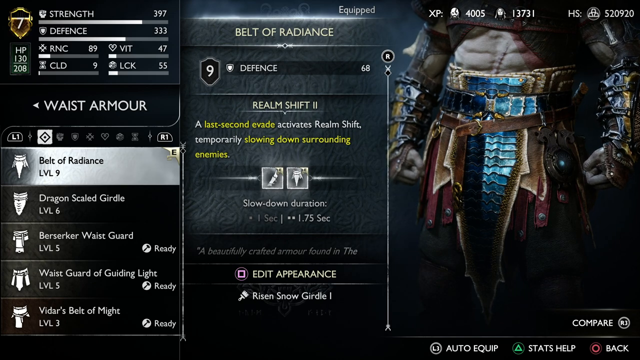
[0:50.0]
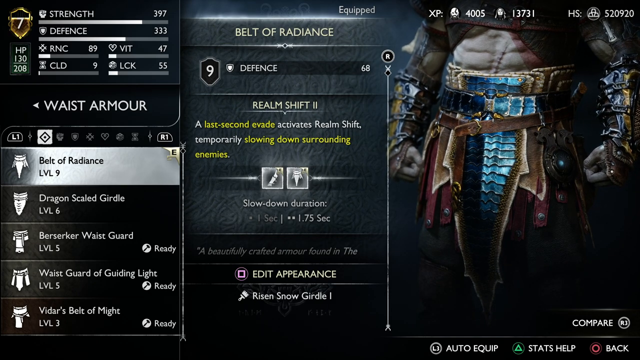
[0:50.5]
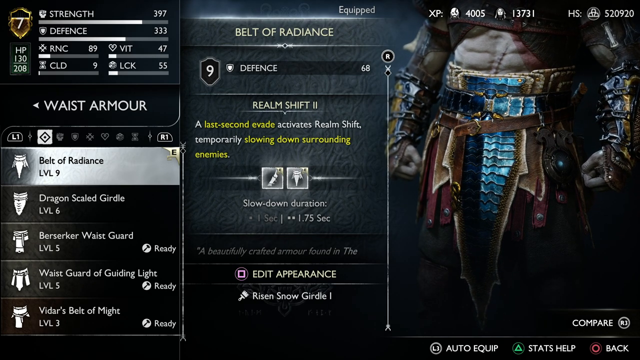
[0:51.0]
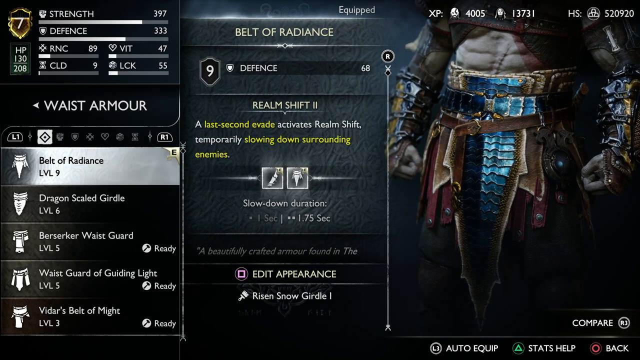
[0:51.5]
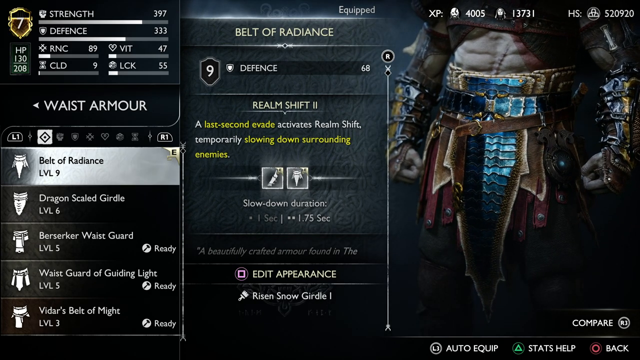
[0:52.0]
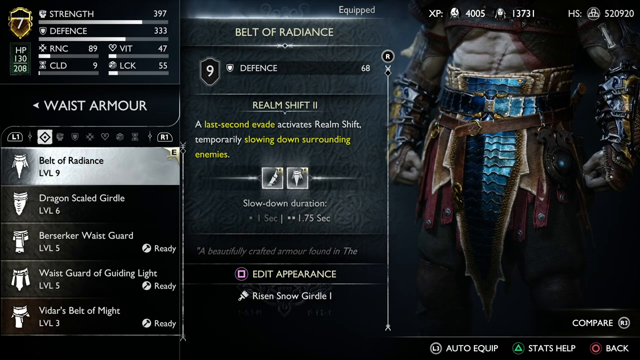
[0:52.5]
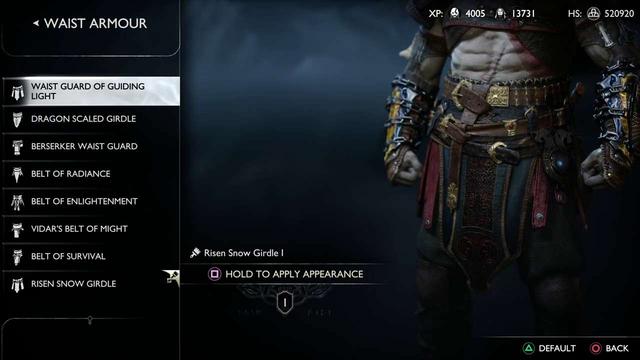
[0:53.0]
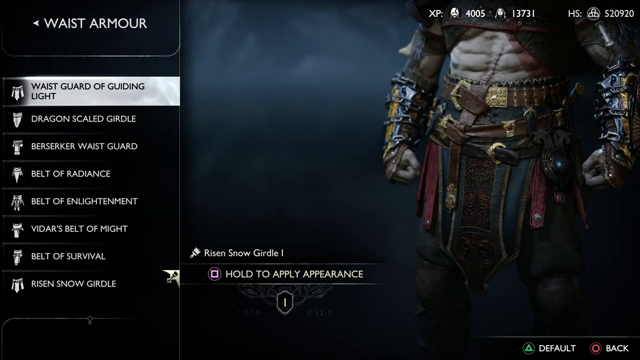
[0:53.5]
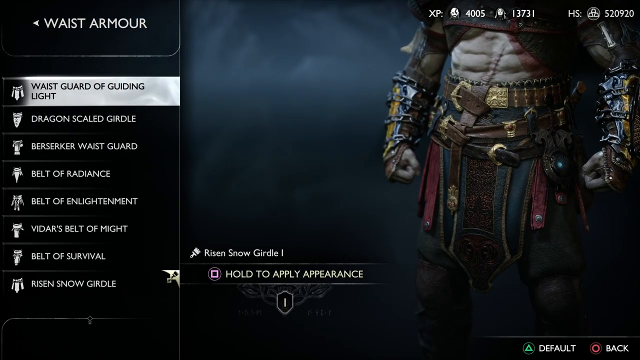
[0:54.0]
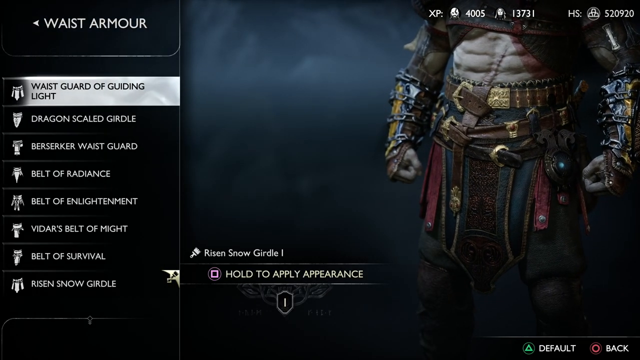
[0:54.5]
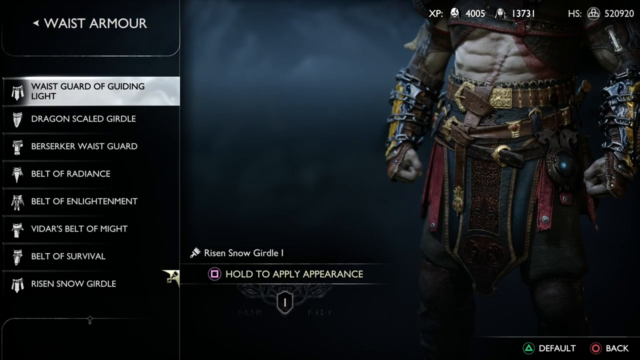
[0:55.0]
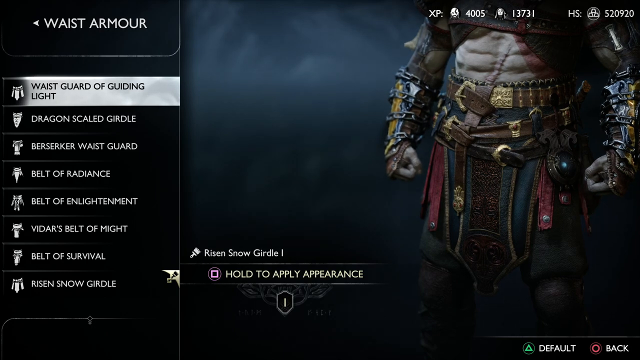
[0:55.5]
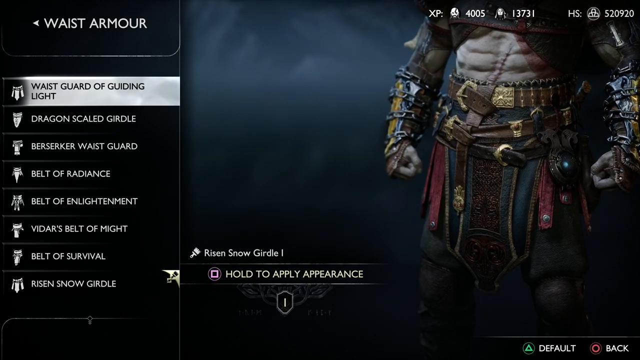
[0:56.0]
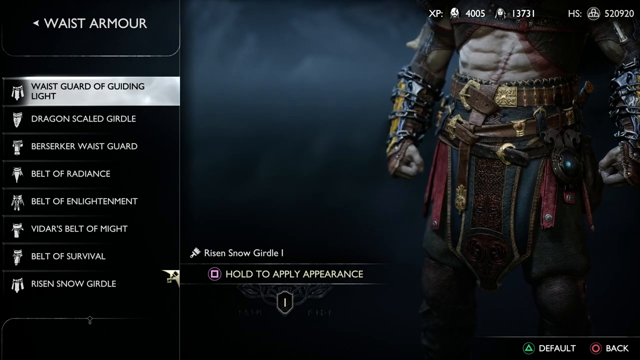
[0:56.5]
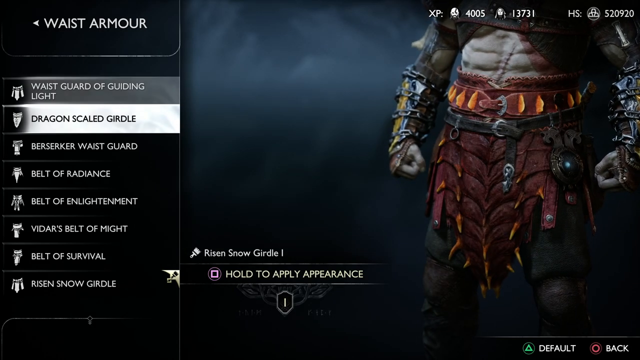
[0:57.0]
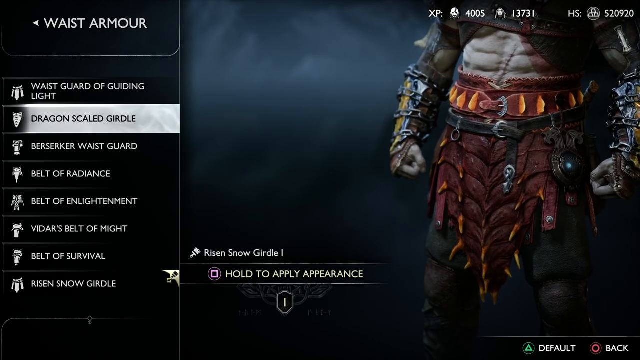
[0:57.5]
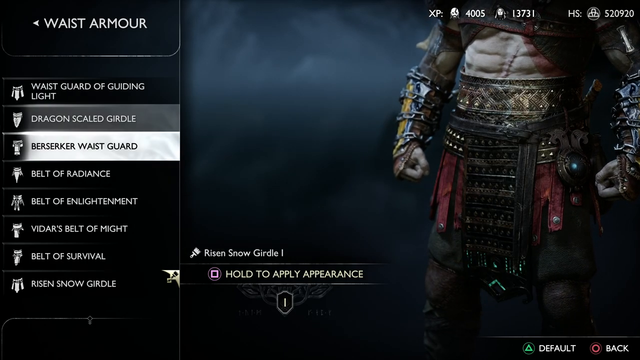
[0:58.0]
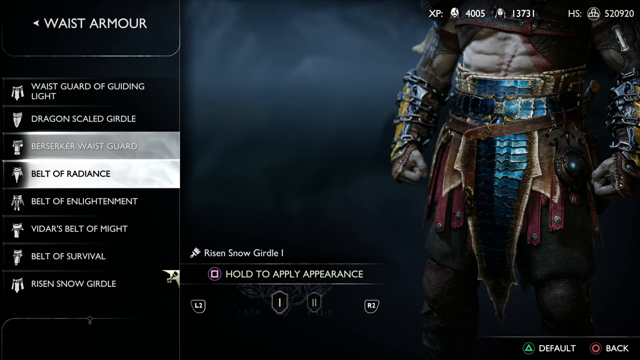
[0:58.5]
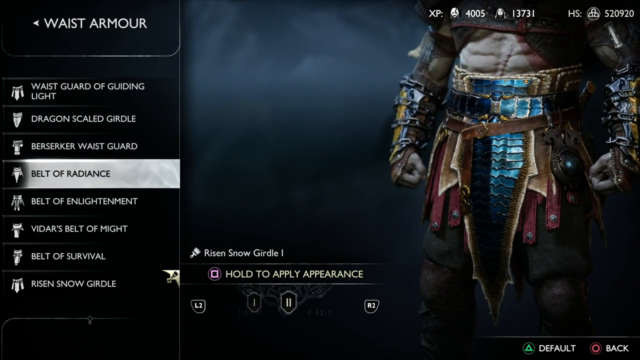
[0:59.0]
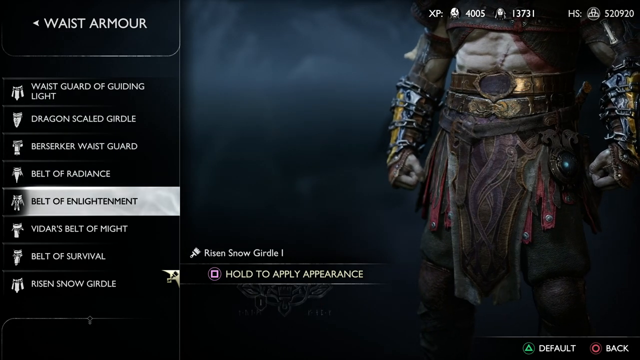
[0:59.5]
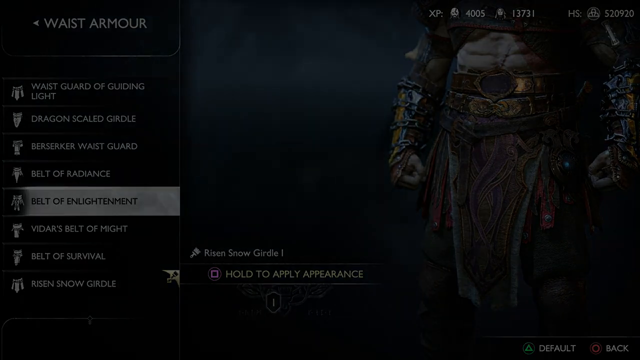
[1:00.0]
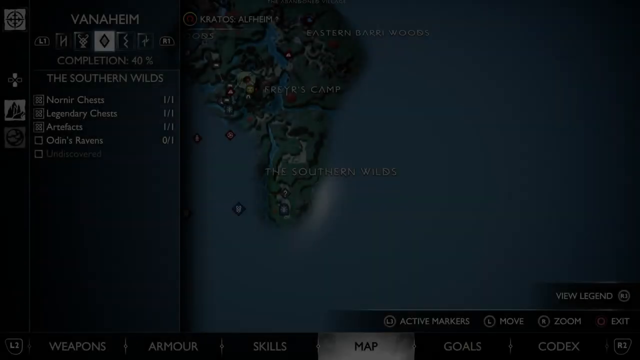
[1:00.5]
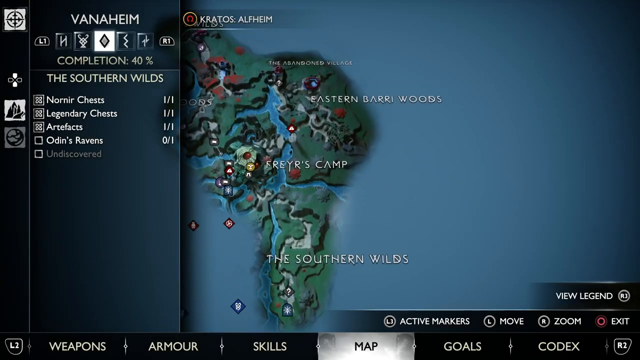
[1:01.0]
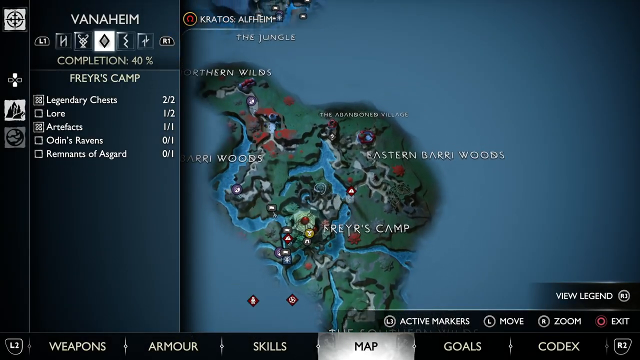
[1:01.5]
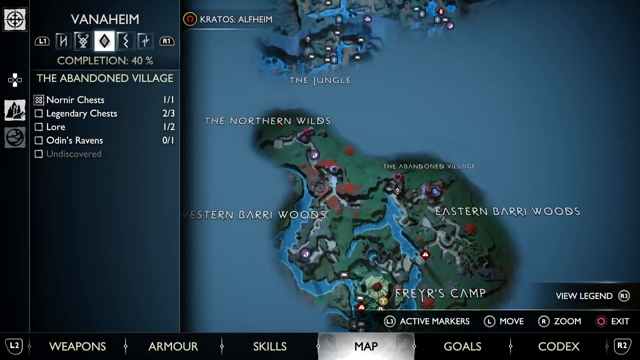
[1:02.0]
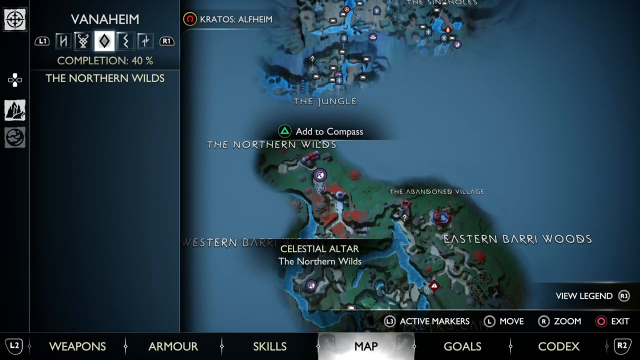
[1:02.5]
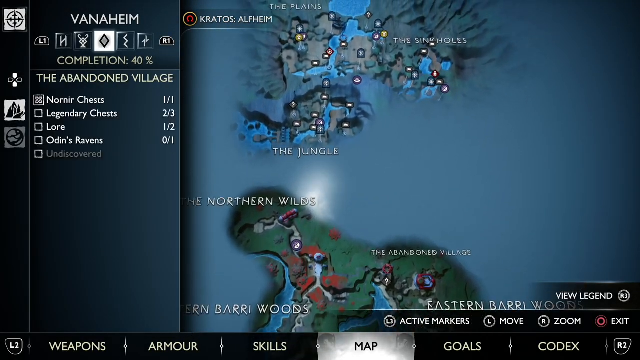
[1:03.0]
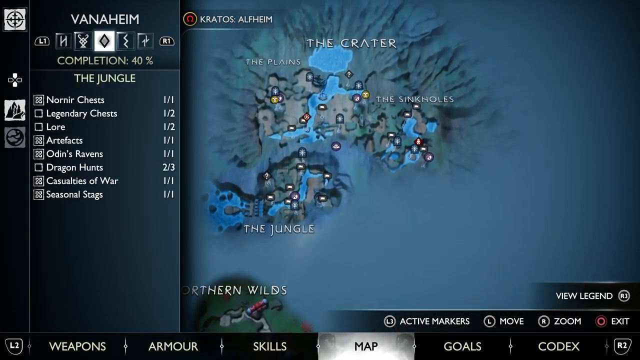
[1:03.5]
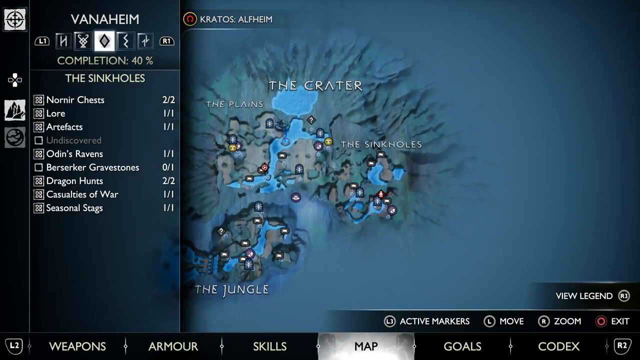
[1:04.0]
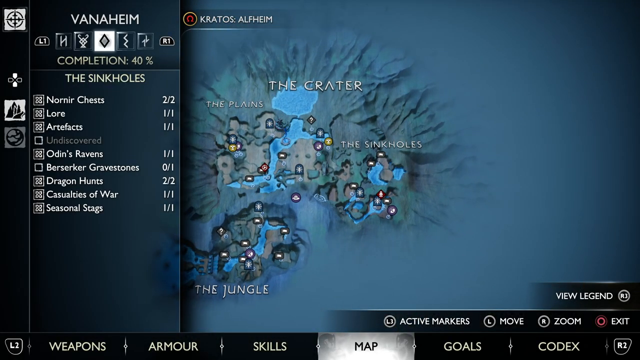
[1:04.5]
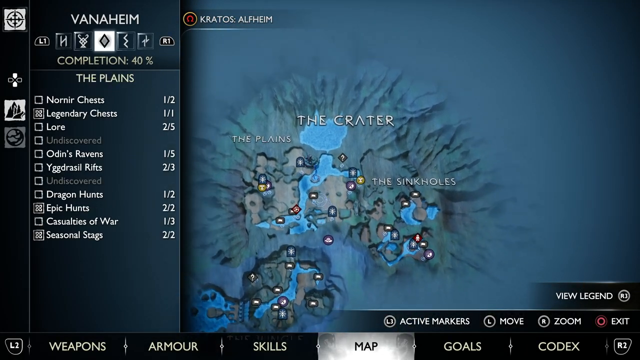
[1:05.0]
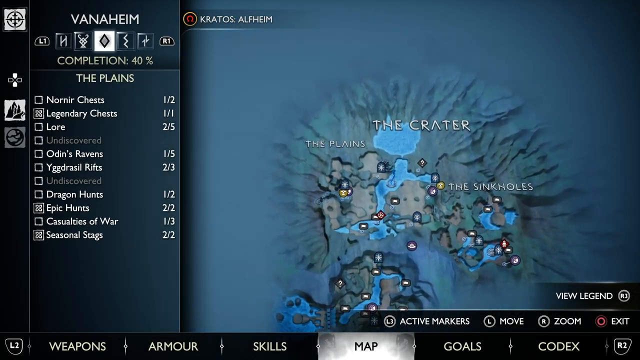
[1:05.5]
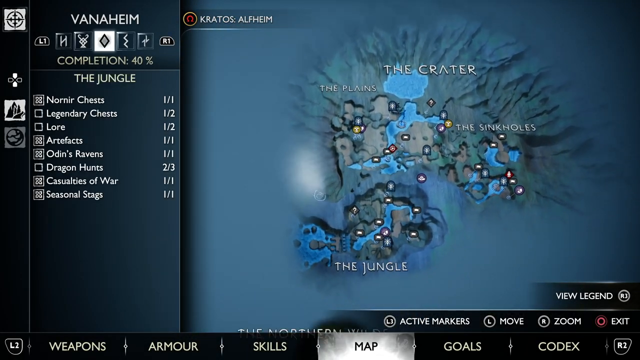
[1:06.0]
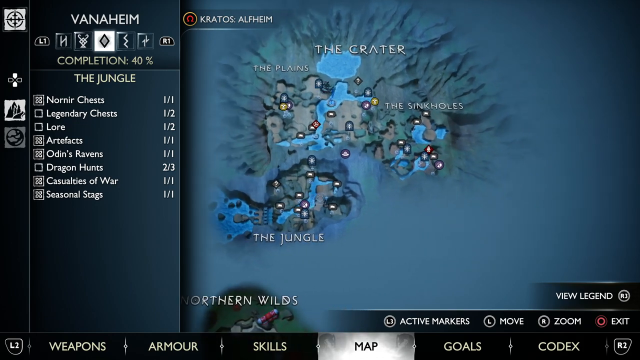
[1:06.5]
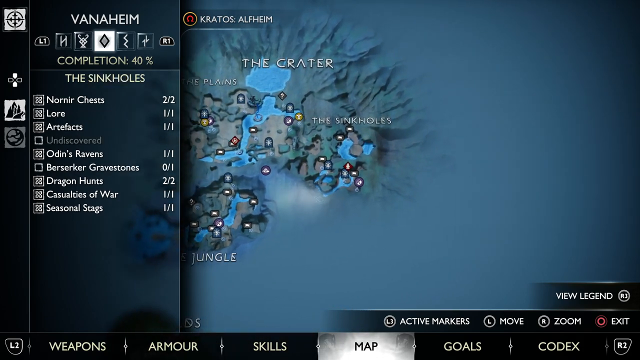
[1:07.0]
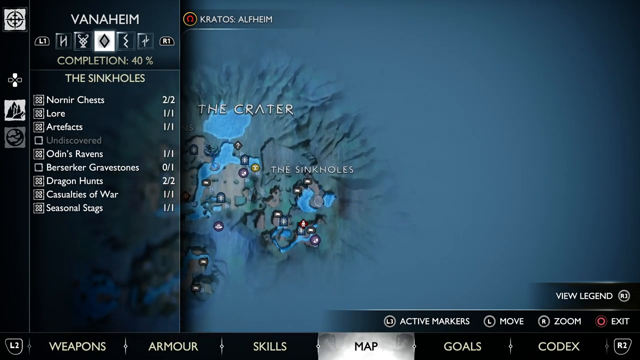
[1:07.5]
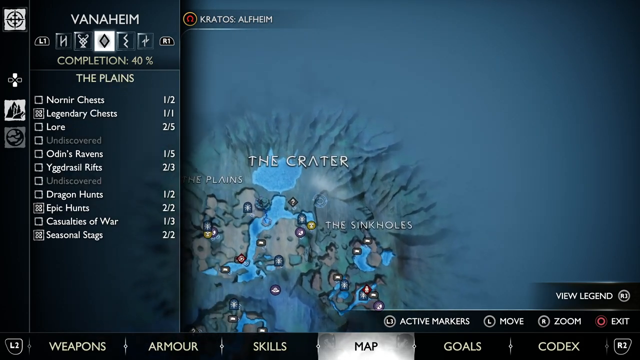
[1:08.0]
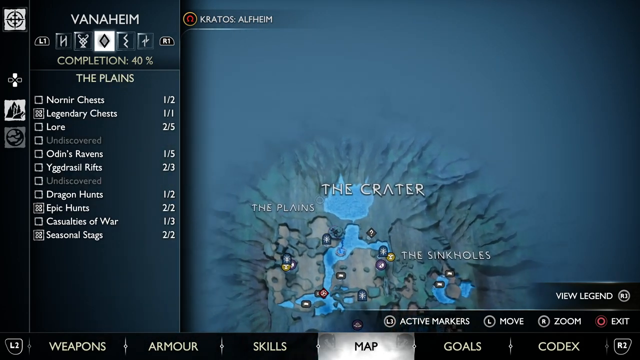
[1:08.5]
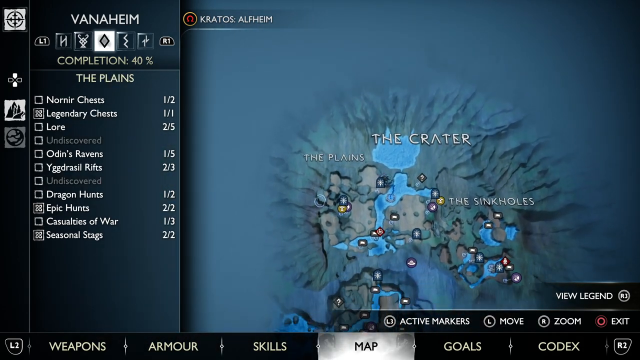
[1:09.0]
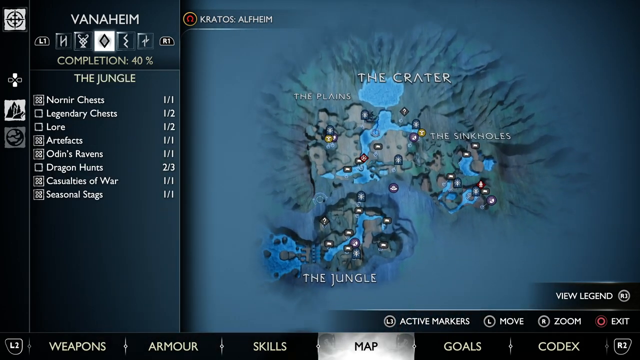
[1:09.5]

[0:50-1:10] The waist armor menu shows an option called the Waist Guard of Guiding Light, which is currently equipped and being previewed on Kratos. The list scrolls past the Dragon Scaled Girdle and the Berserker Waist Guard back to the Belt of Radiance. The view then transitions away from the customization menu to what looks like a map, and the cursor scrolls around, aiming at different locations. It apparently passes over a location called the Sinkholes, another called the Jungle, and finally looks for landmarks in a location called the Crater. The map shows kind of a snowy winter tundra; the location looks very desolate, with what looks like a lot of damage. There appear to be small multicolored landmarks on the map: some have question marks, some are oval-shaped and red with what looks to be a lantern, and others are circle-shaped and yellow and appear to have angel wings, so there seem to be several different kinds of landmarks.